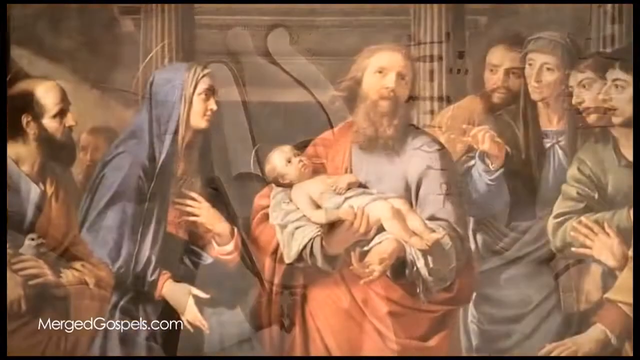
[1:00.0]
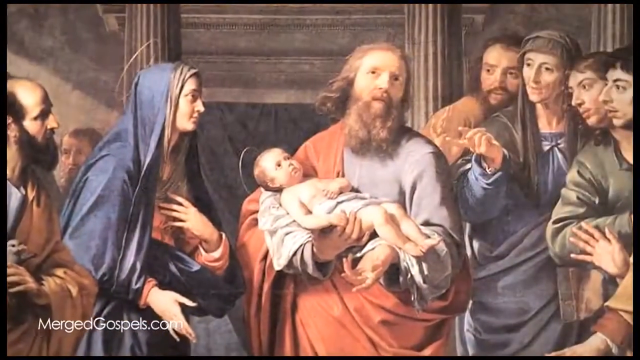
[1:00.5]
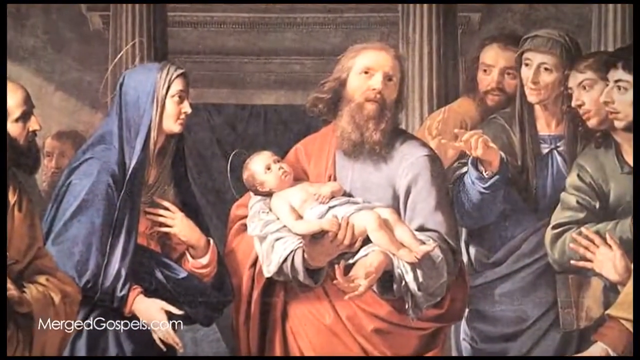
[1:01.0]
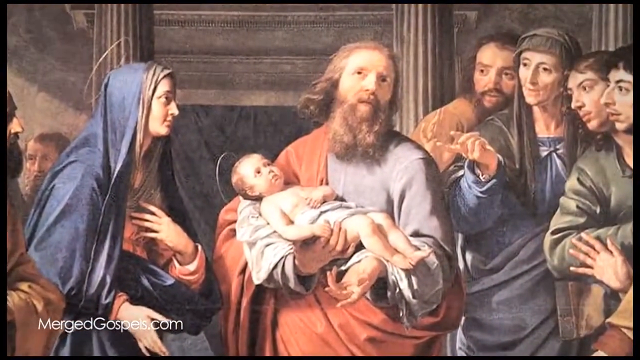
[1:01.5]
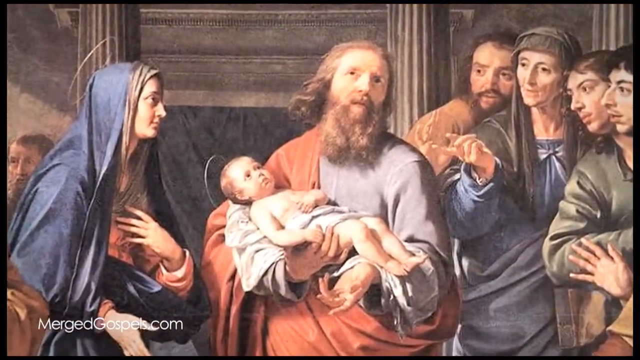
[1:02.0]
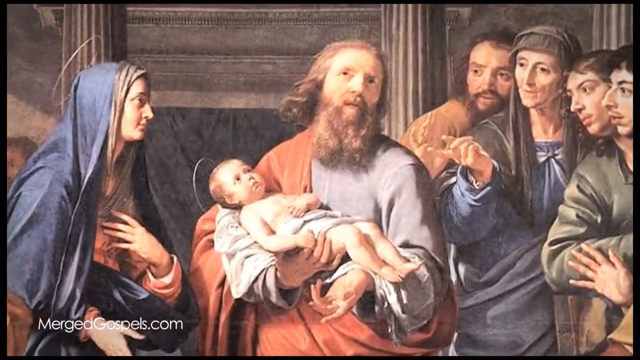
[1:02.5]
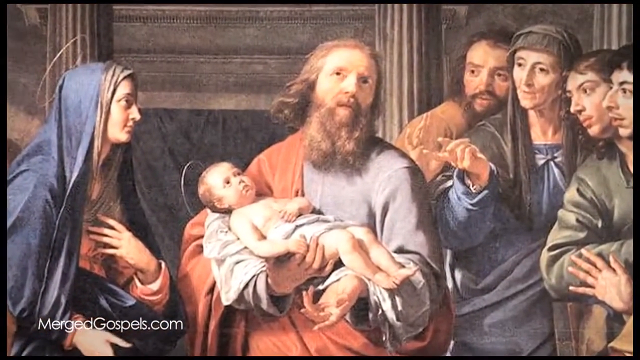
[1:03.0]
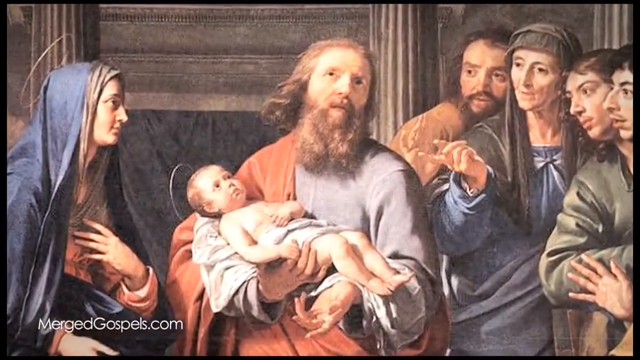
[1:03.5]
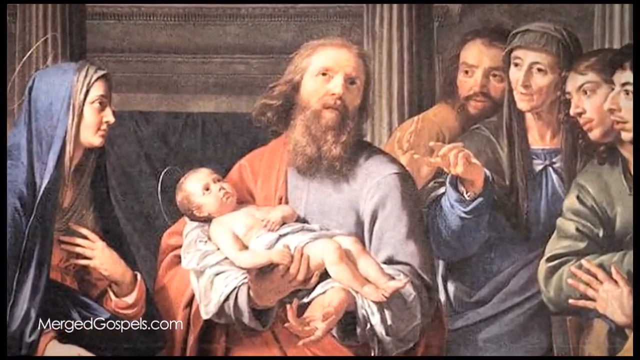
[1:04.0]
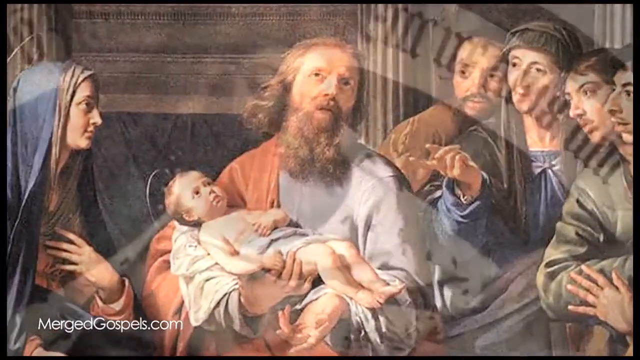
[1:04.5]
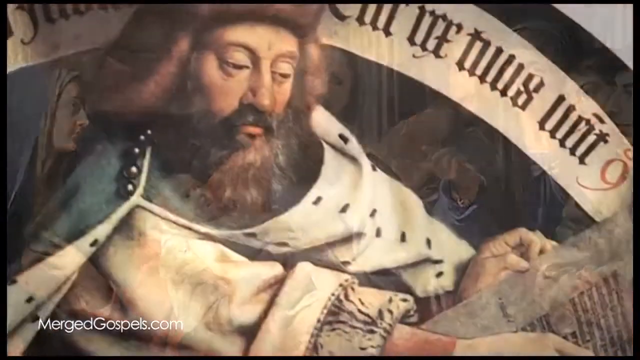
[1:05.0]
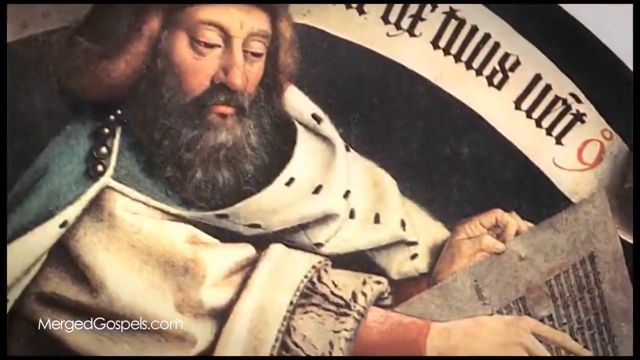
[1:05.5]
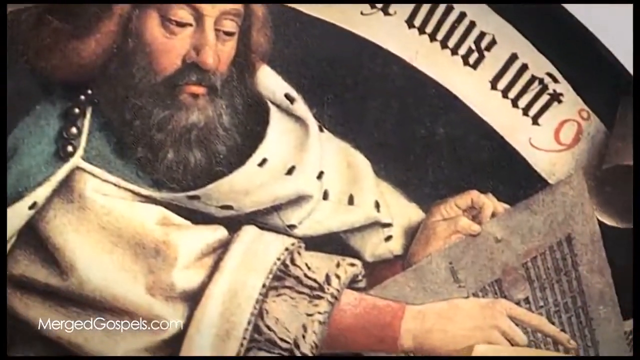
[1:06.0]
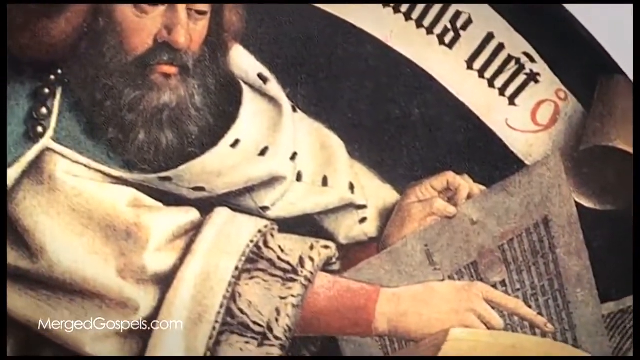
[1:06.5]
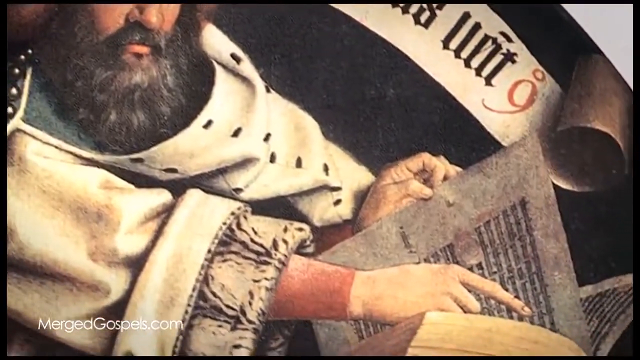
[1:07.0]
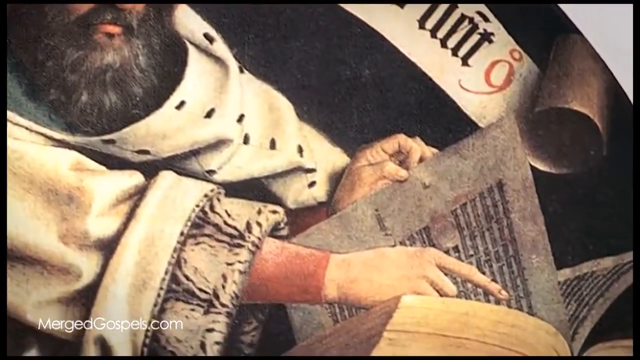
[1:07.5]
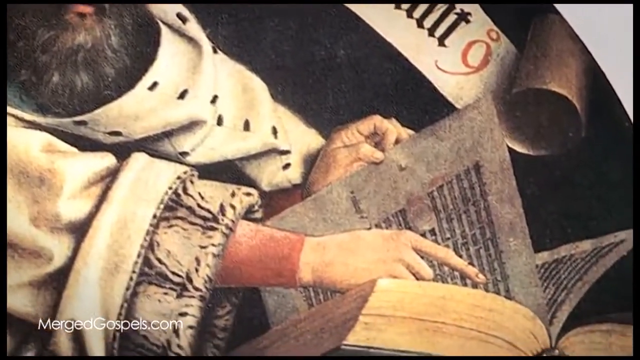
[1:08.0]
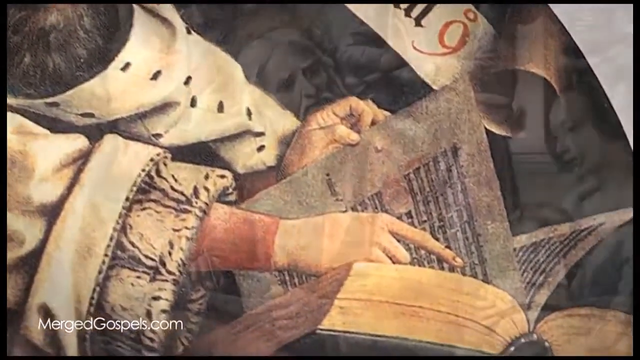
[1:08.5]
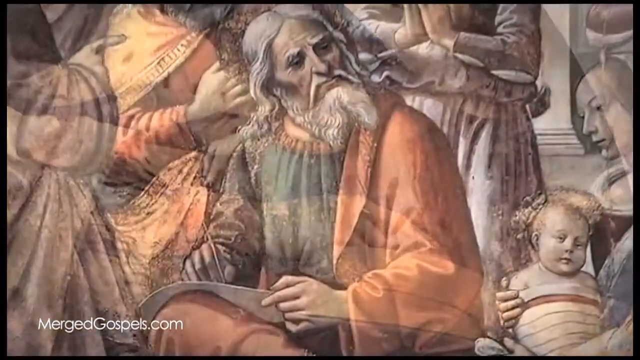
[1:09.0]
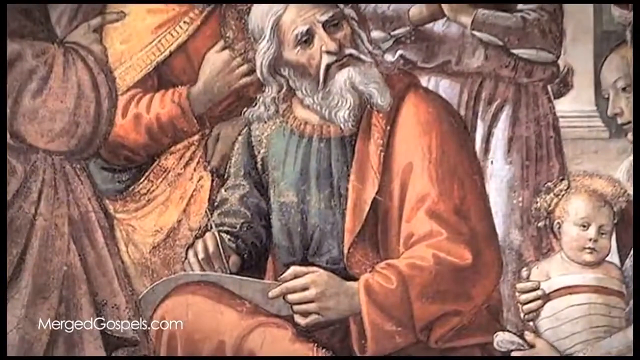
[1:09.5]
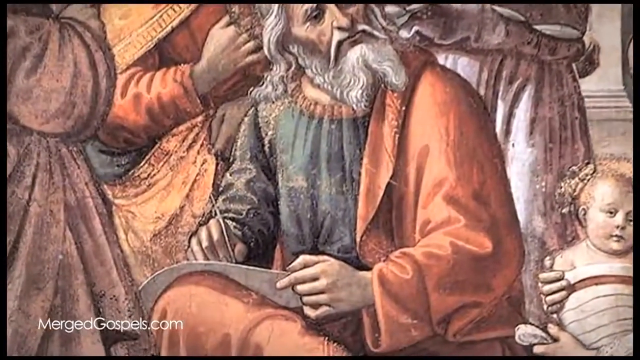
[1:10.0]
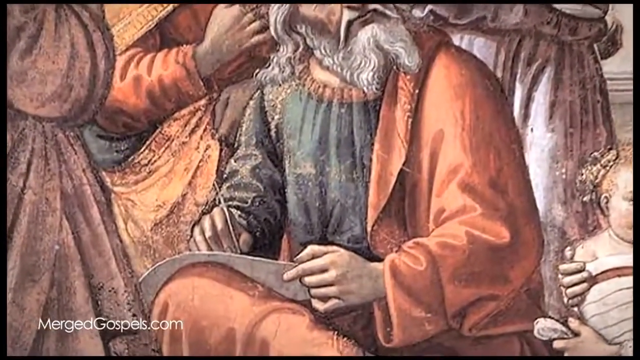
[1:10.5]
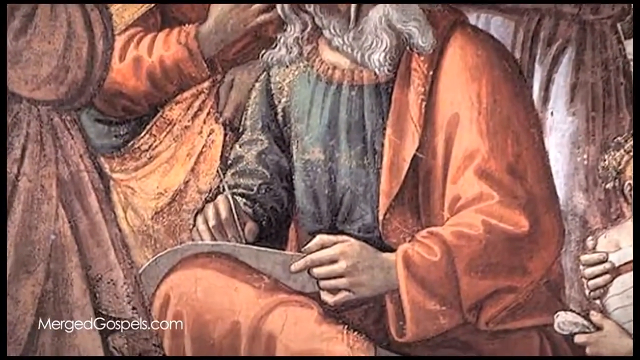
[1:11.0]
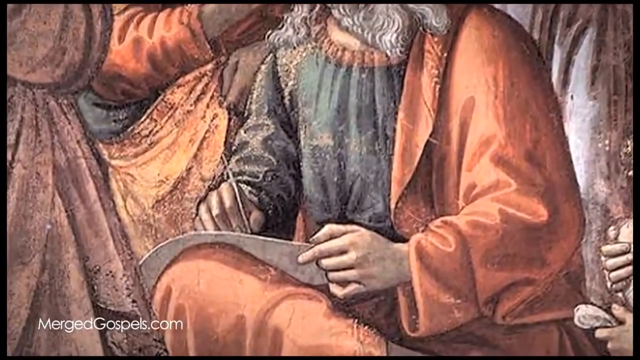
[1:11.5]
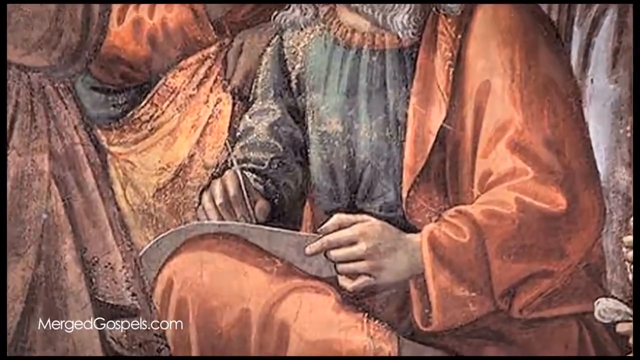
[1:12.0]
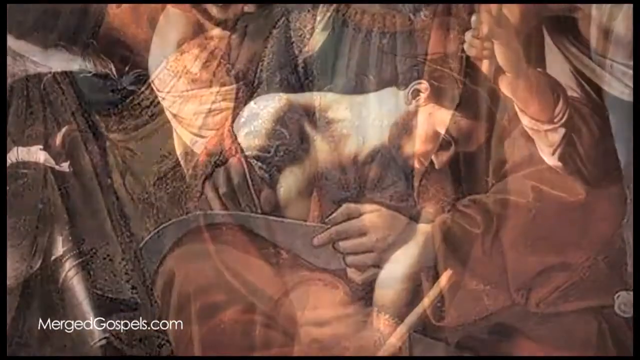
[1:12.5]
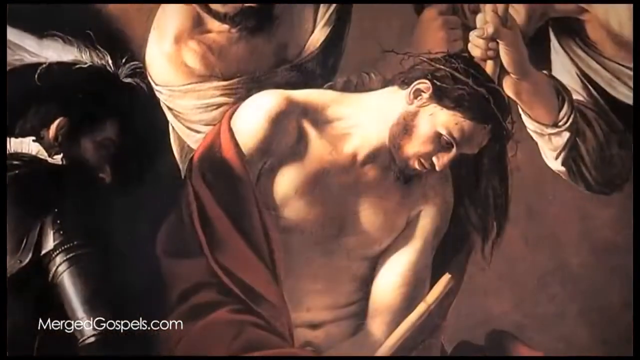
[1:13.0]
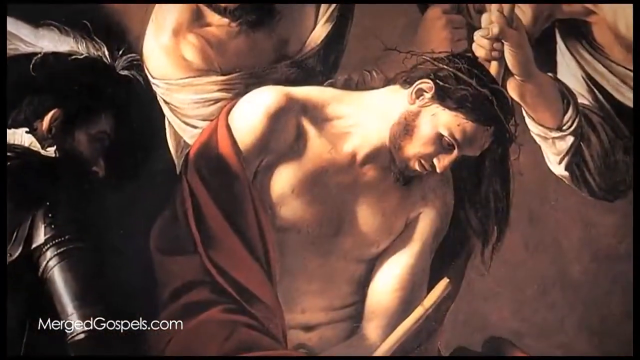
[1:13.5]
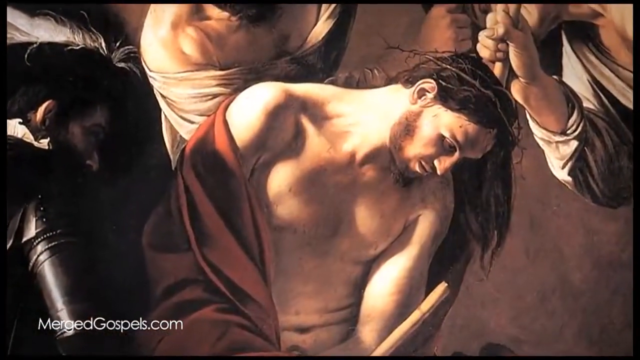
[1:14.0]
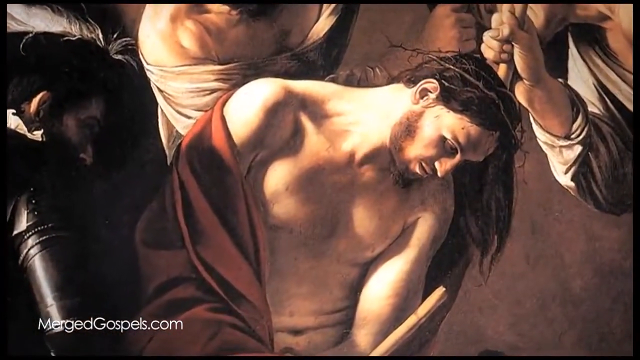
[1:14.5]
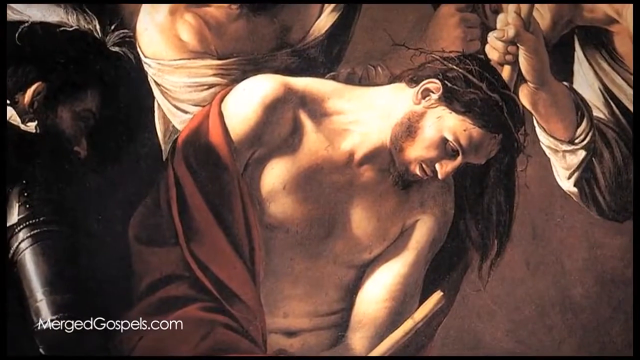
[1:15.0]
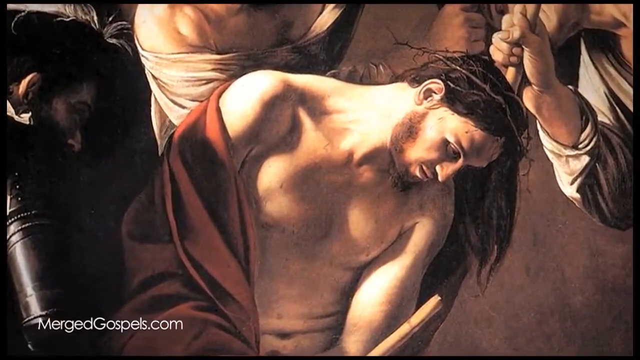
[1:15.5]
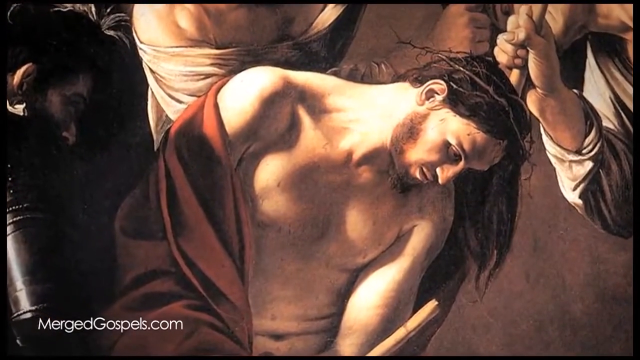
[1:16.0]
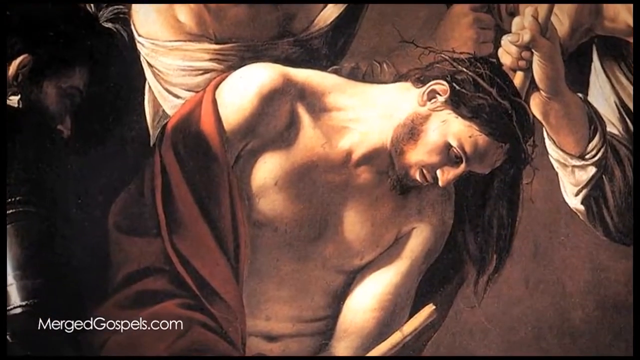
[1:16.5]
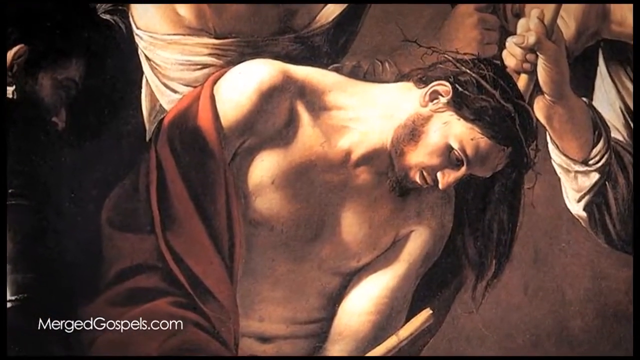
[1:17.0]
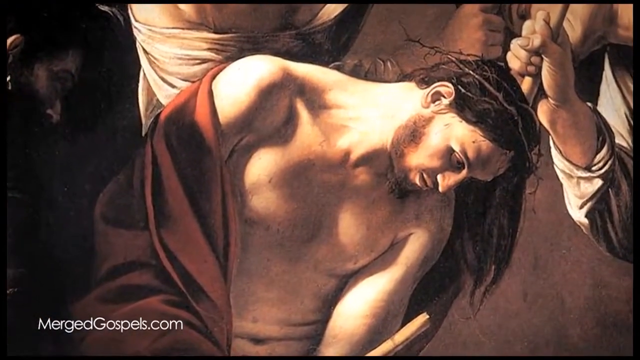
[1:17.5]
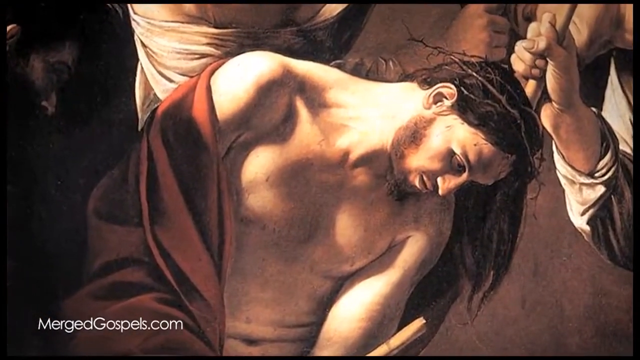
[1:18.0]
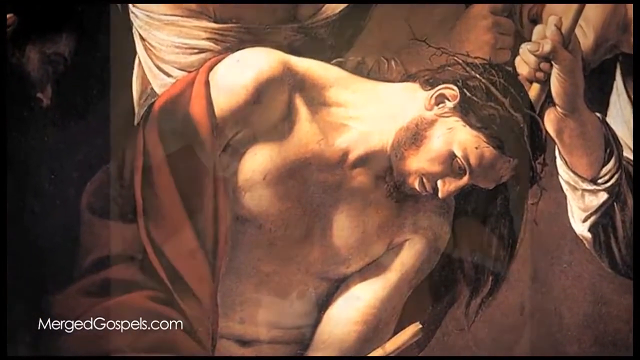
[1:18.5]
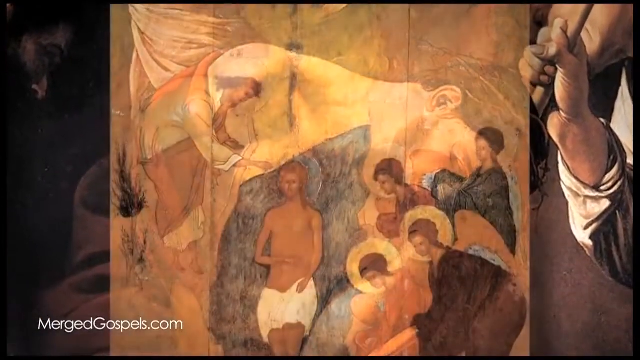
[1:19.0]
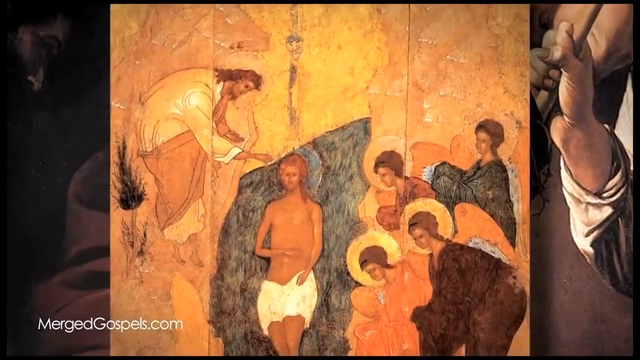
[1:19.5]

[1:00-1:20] A Renaissance painting shows a man holding the baby Jesus. The man is in the centre of the image, with a large beard and brown hair, wearing a light blue outfit with a red cloak. He cups the baby with one hand and holds the other hand out in front of him with the palm facing up. The baby lies on his arm, supported on the legs by the other arm, facing the ceiling, with one arm over its body and one resting to its side; the baby has a halo. The man holding the baby is looking to the sky. To the left is the Virgin Mary, with a blue head covering, looking towards the man and the baby, one hand resting on her heart and one in front of her; she also has a halo. A crowd of people around them are all looking at the man and the baby, two figures on the left-hand side of the image and four on the right-hand side. The camera slowly pans in, focusing on the man. Next is another painting of a man sat writing, wearing a blue top and an orange cloak, looking off to the right-hand side of the image as he writes. Then comes an image of Jesus at his crucifixion: he has no clothes on his chest, a cloak to the side, and wears the crown of thorns. He looks dejected, looking at the floor. Some figures in the background are not clear. The camera zooms in and begins to turn clockwise, focusing on Jesus looking dejected at the floor.